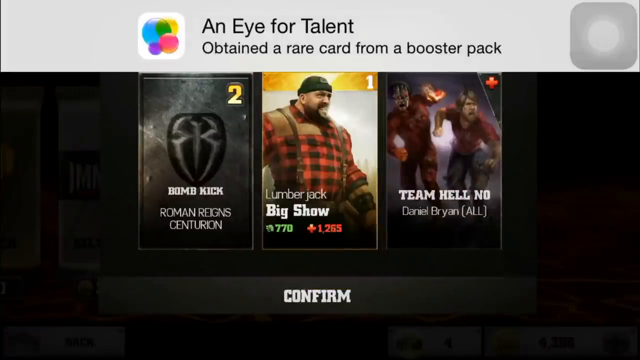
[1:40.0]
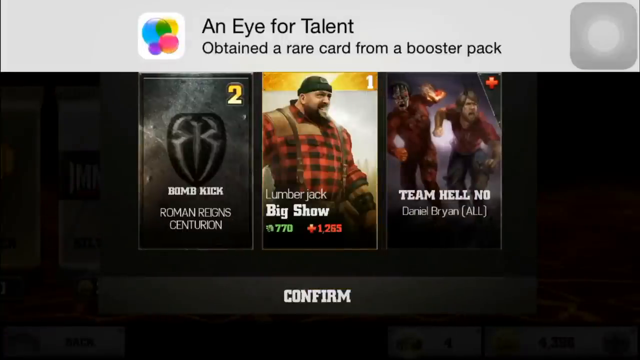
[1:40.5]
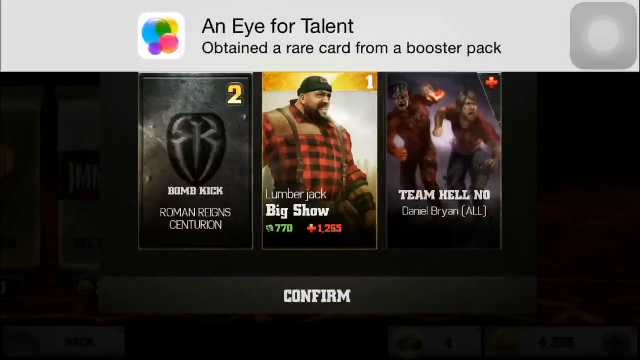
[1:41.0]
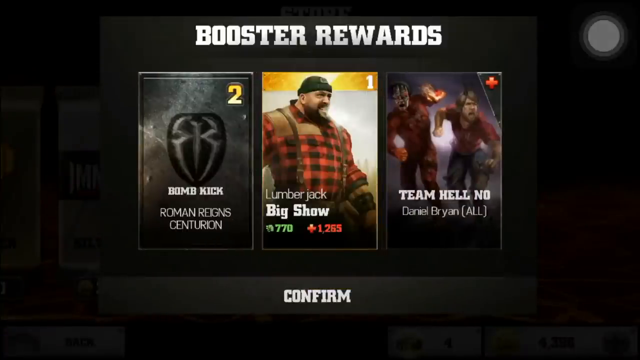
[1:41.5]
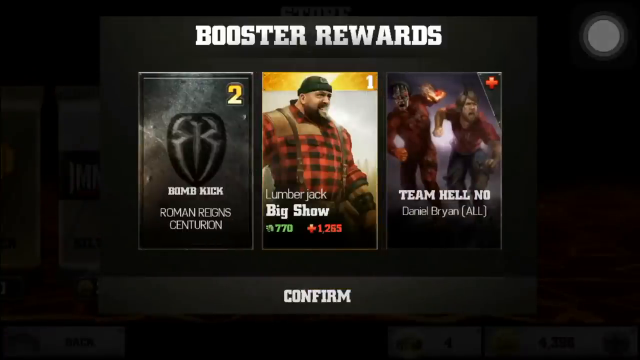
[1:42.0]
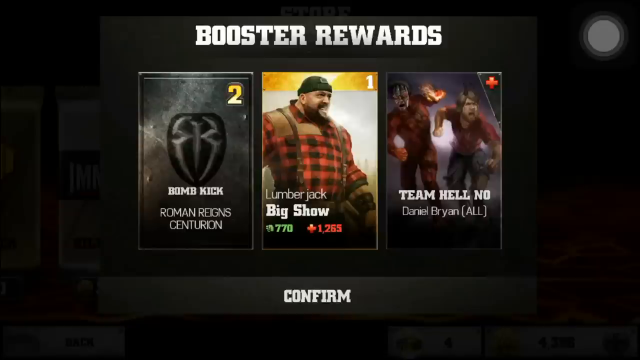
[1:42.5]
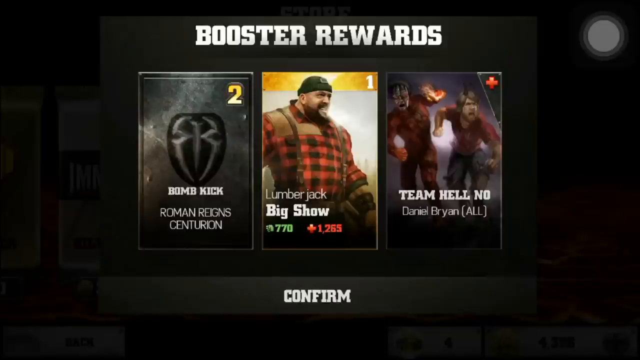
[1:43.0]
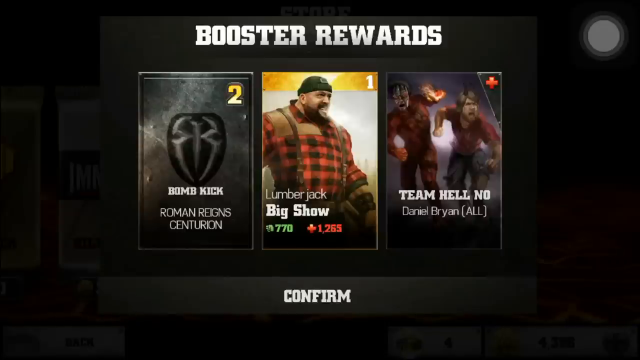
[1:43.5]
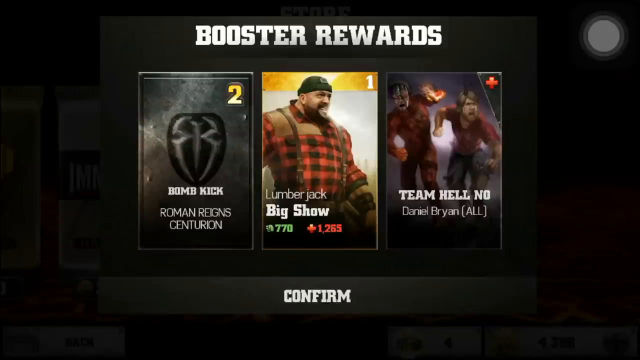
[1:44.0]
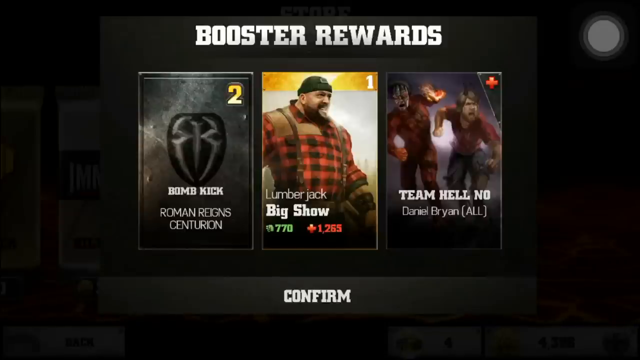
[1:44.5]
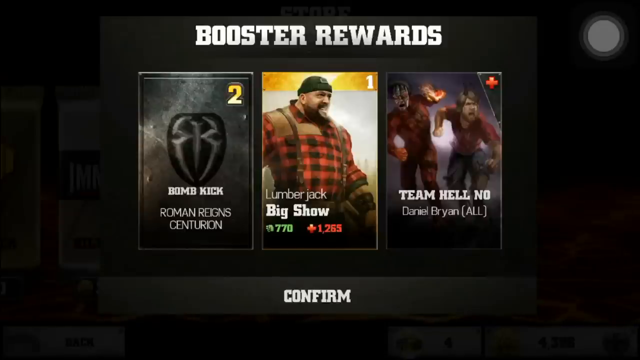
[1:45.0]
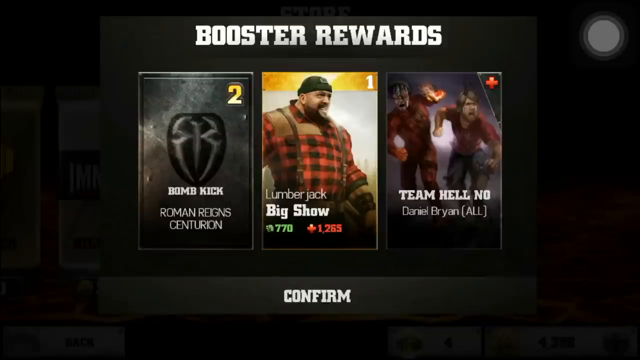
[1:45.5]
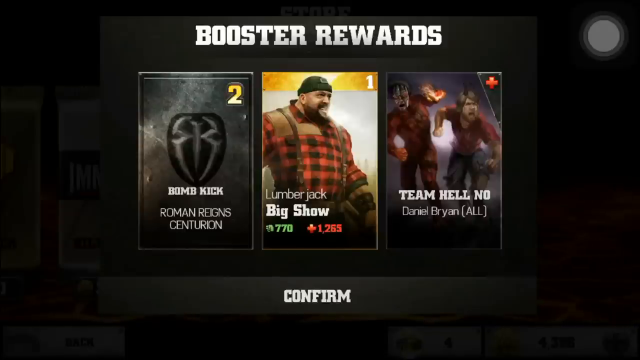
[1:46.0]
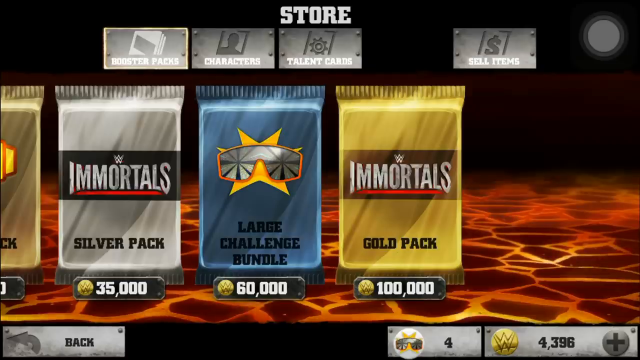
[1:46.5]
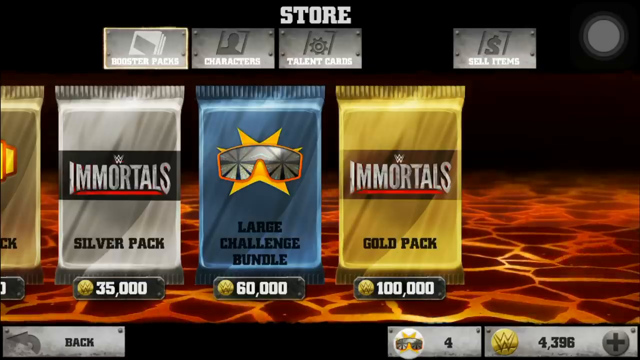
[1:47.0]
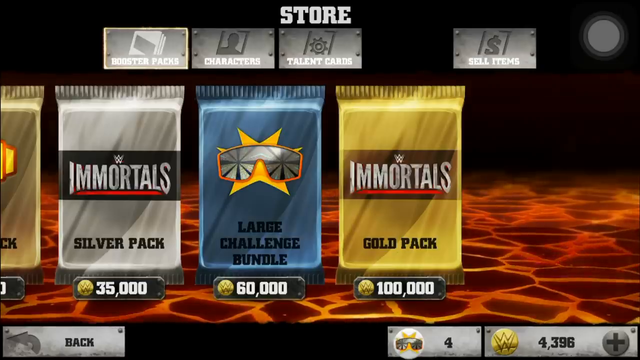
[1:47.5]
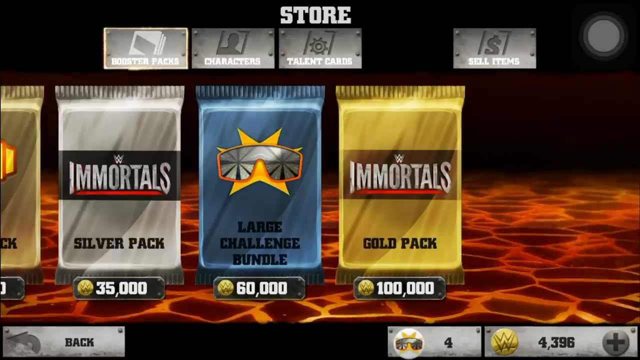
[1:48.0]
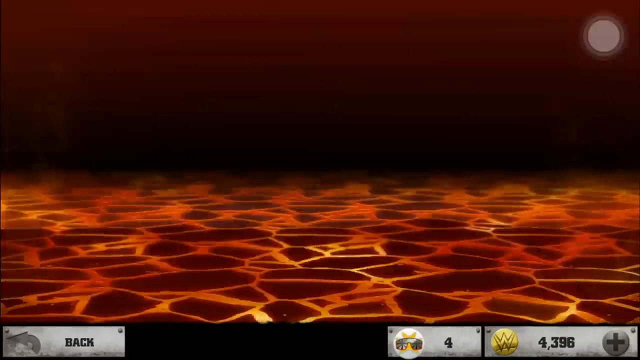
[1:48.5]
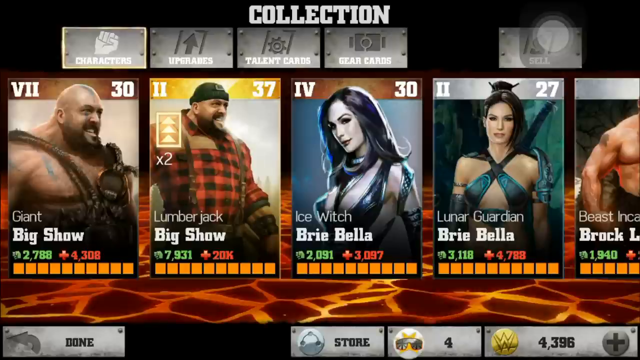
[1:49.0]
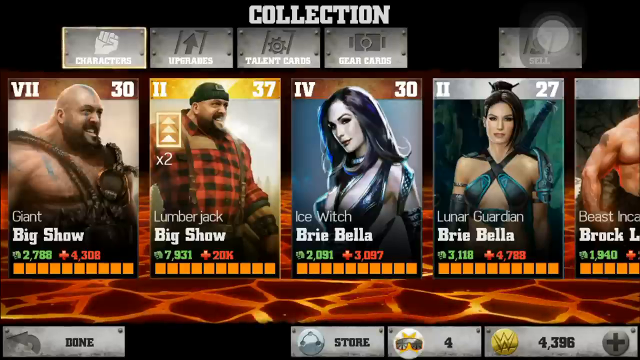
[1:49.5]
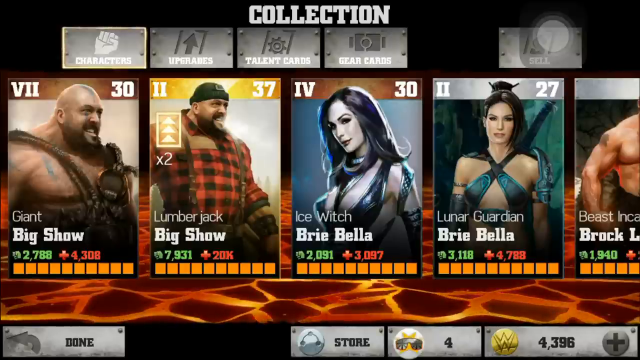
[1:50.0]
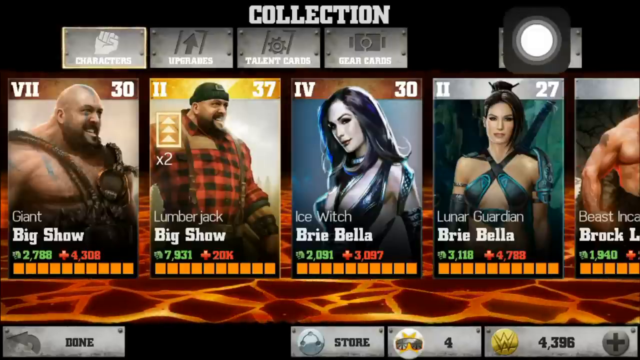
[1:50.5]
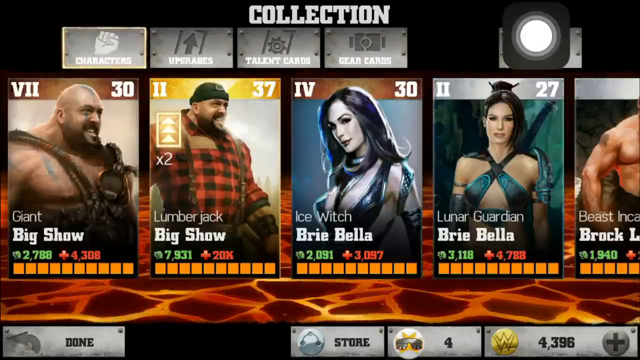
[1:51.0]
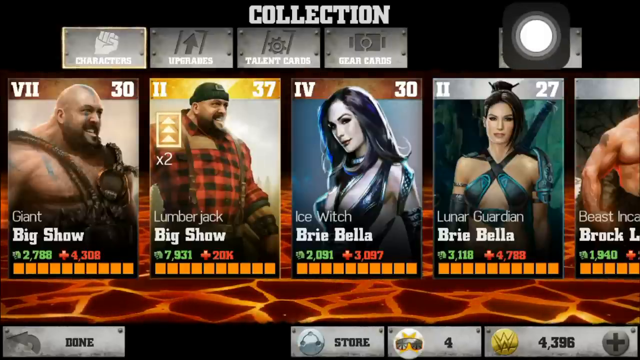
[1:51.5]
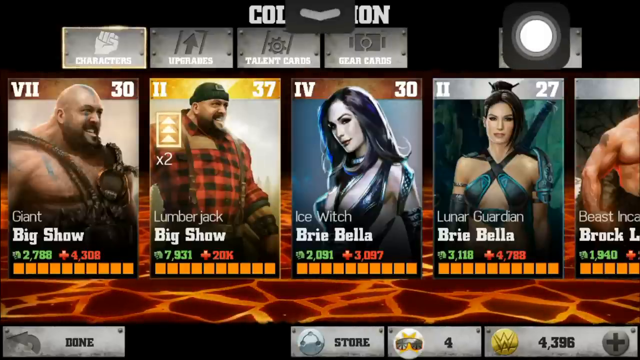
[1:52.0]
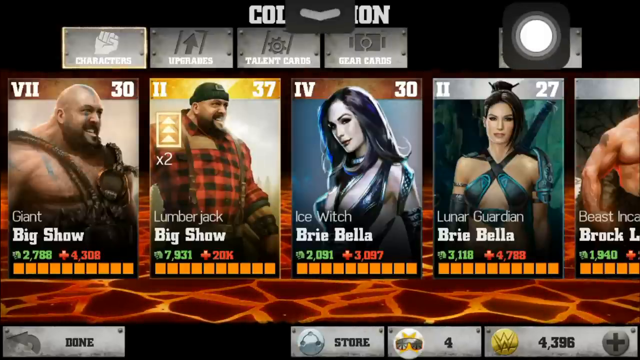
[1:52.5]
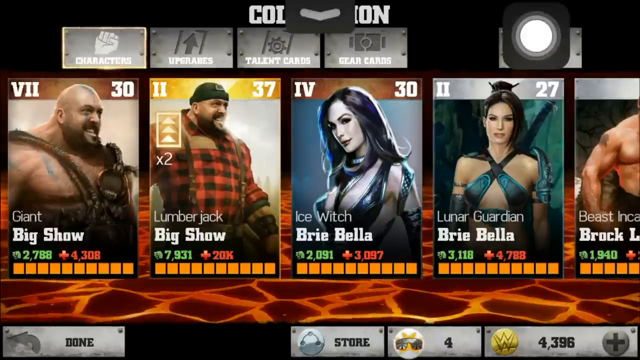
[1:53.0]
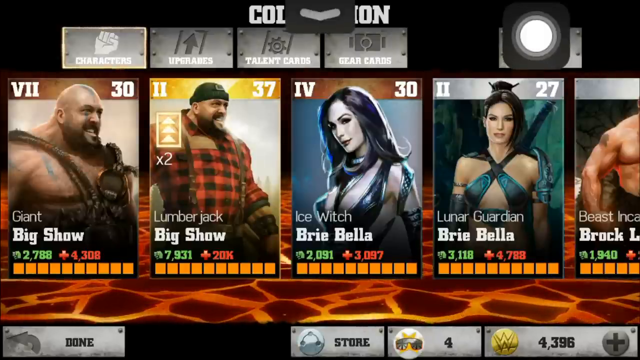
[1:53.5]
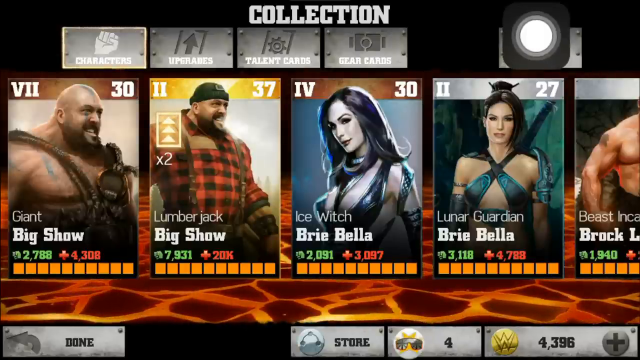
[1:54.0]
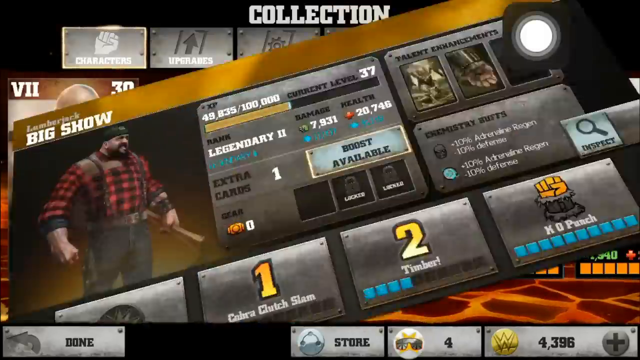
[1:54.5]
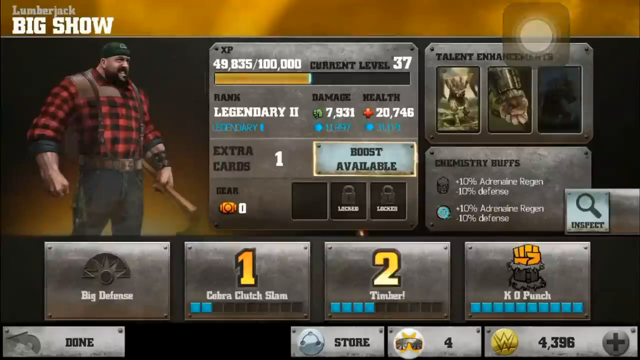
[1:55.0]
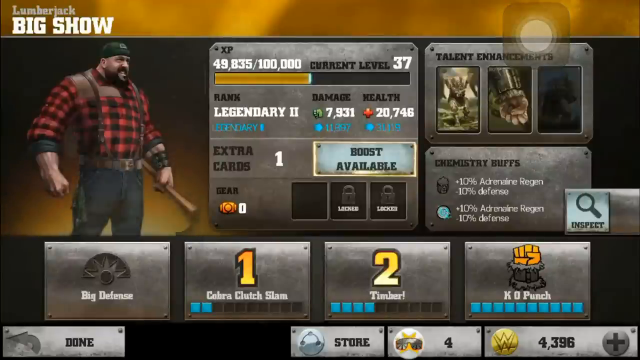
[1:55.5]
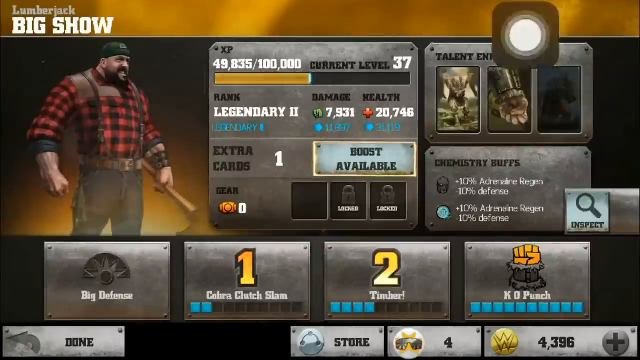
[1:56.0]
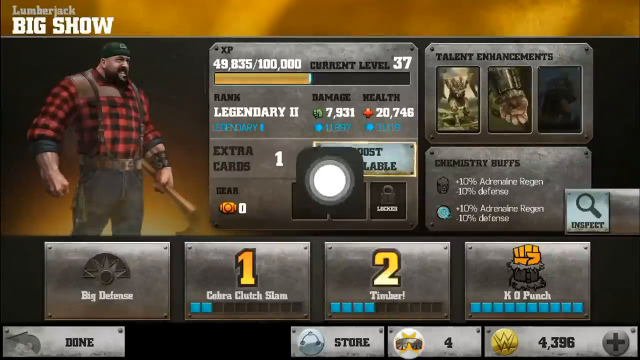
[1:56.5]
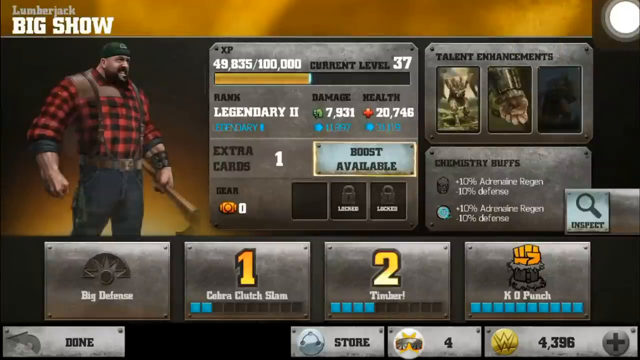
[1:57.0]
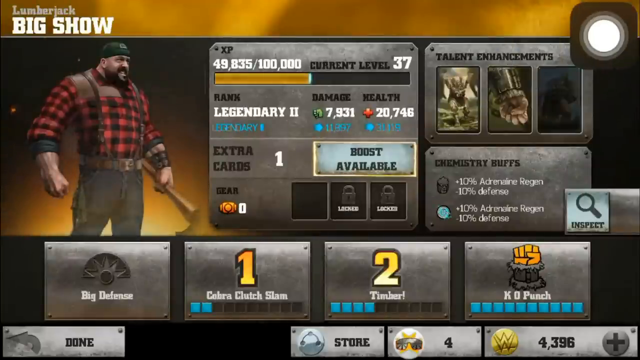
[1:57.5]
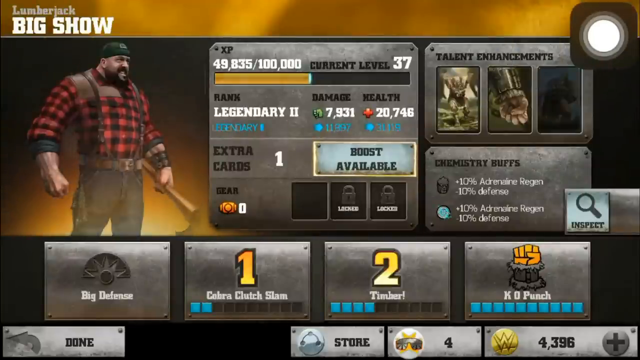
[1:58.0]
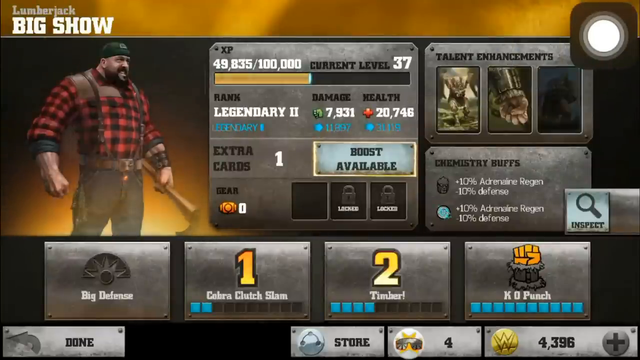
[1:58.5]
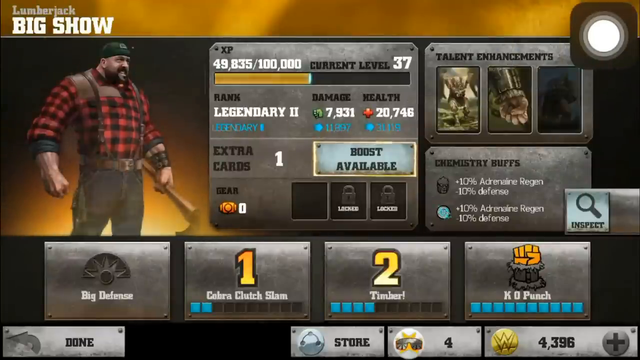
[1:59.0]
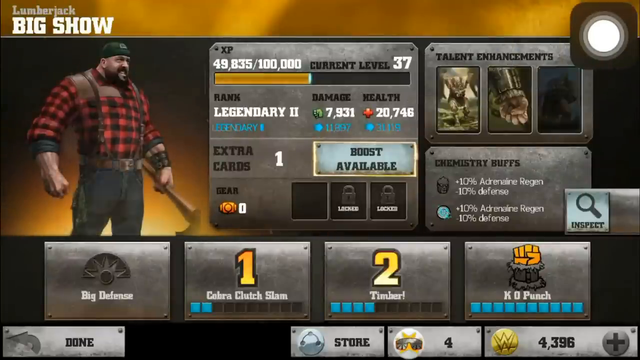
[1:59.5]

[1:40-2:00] The new cards are still shown: a Bomb Kick Roman Reigns Centurion card, a Lumberjack Big Show card and a Team Hell No Daniel Bryan card. The person goes back to the packs, then opens collections, apparently showing all the cards they own: a Giant Big Show card, a Lumberjack Big Show card, an Ice Witch Bria Bella card, a Luna Garden Bria Bella card and a Beast Brock Lesnar card. They then look at the newly obtained Lumberjack Big Show card, apparently the legendary card, which shows stats such as damage and health.